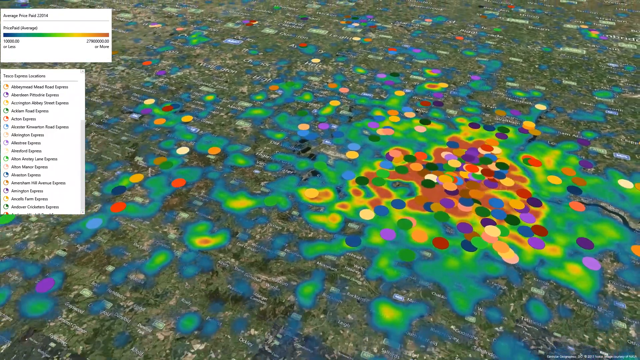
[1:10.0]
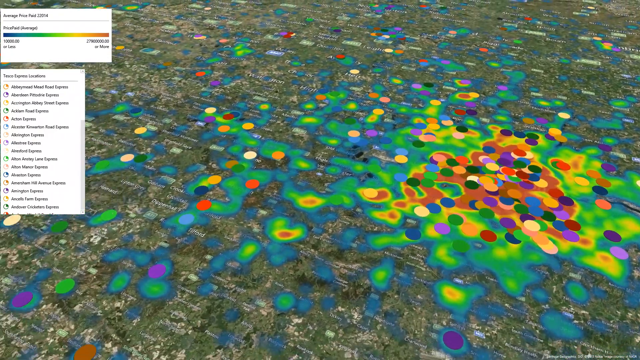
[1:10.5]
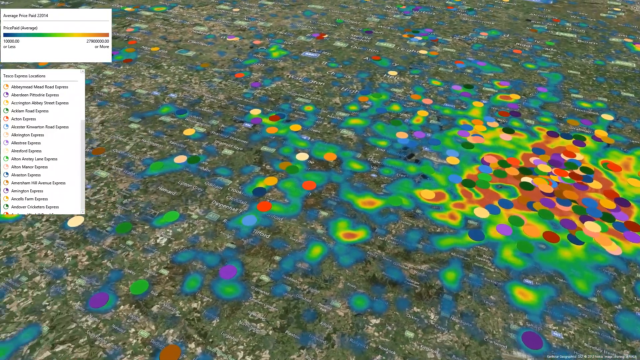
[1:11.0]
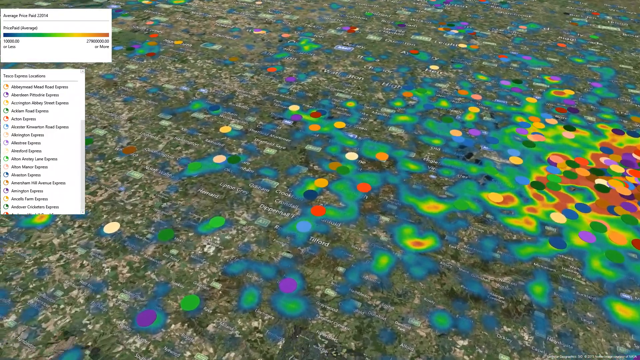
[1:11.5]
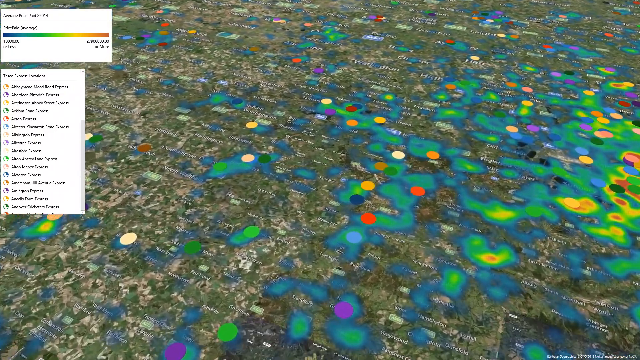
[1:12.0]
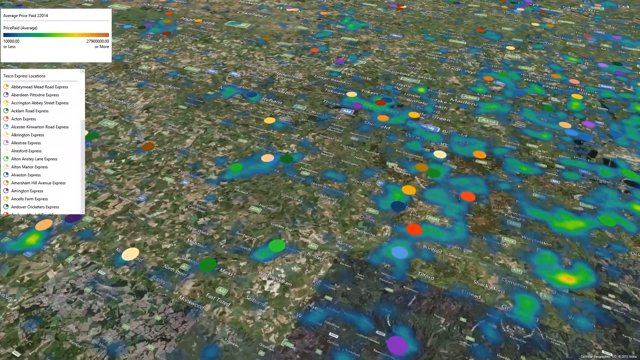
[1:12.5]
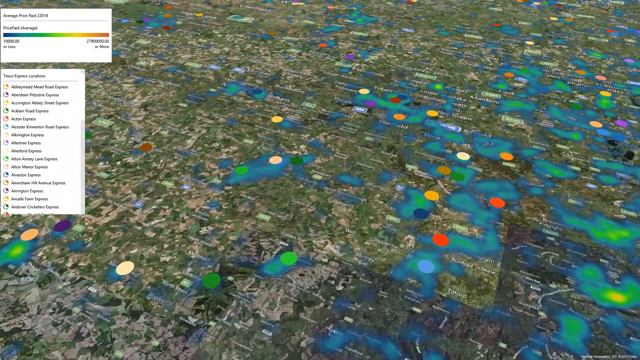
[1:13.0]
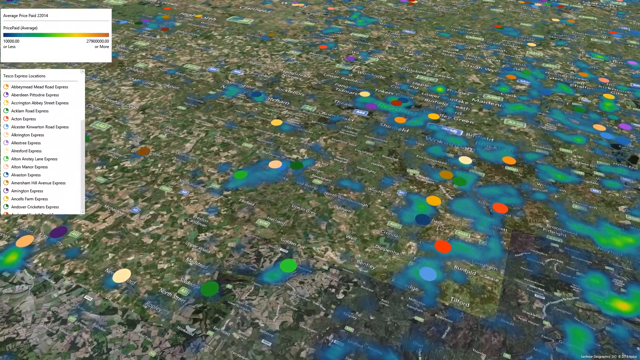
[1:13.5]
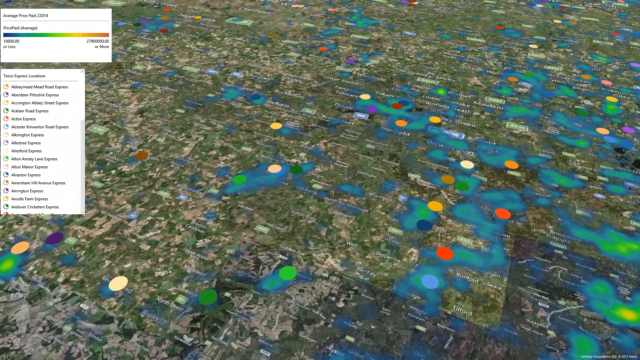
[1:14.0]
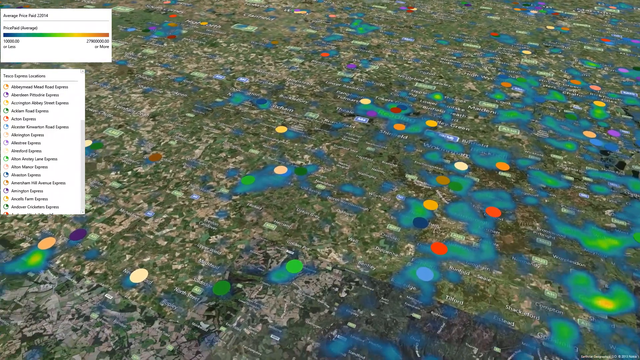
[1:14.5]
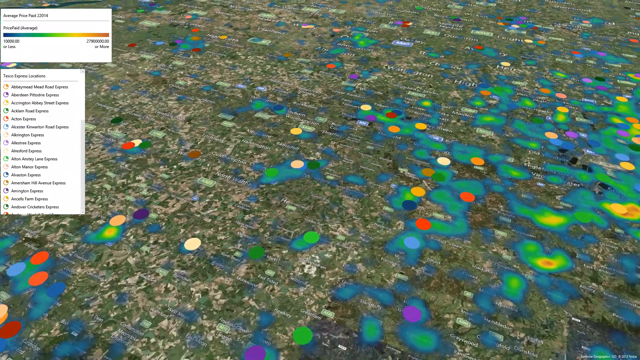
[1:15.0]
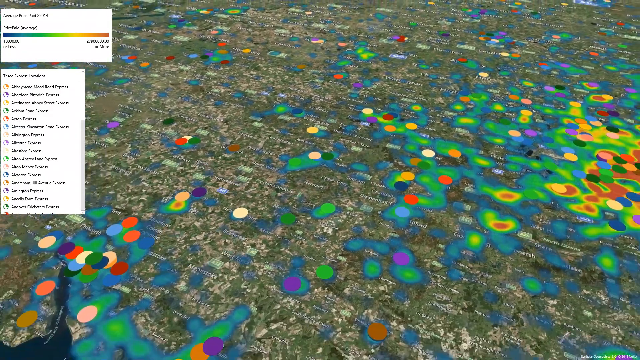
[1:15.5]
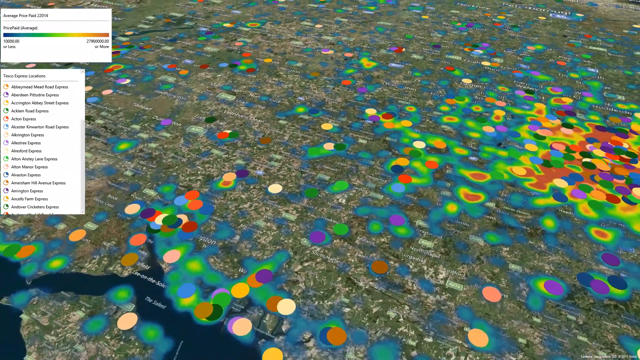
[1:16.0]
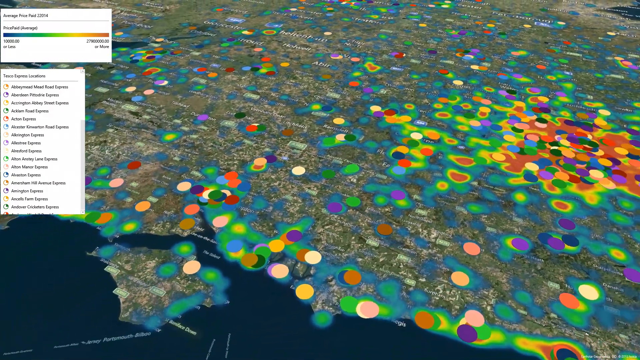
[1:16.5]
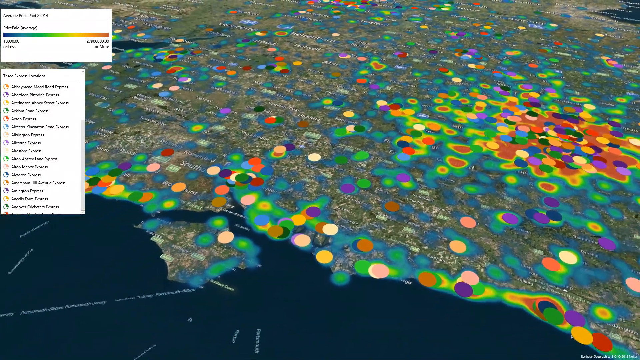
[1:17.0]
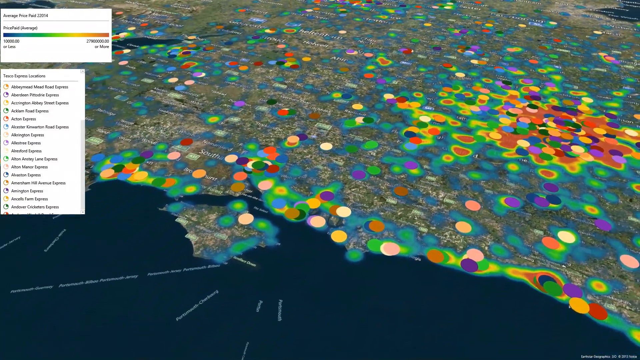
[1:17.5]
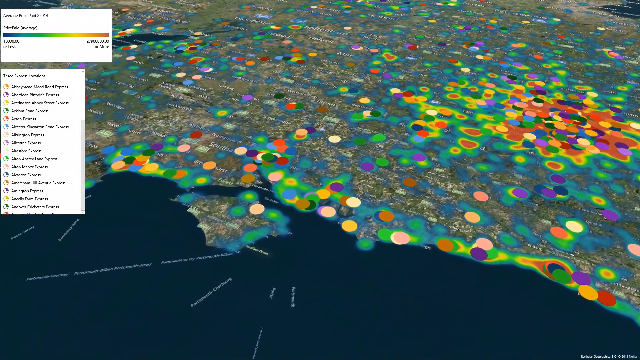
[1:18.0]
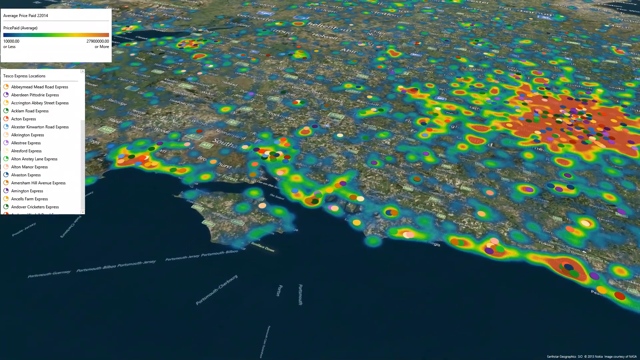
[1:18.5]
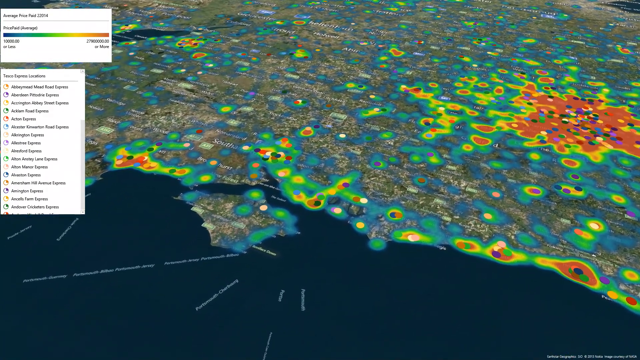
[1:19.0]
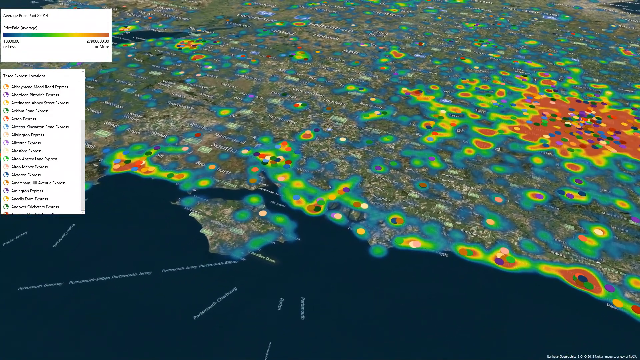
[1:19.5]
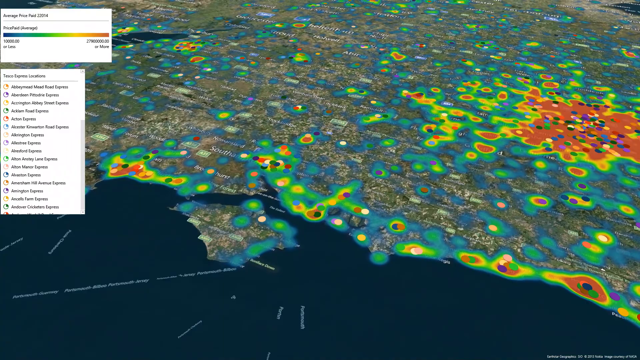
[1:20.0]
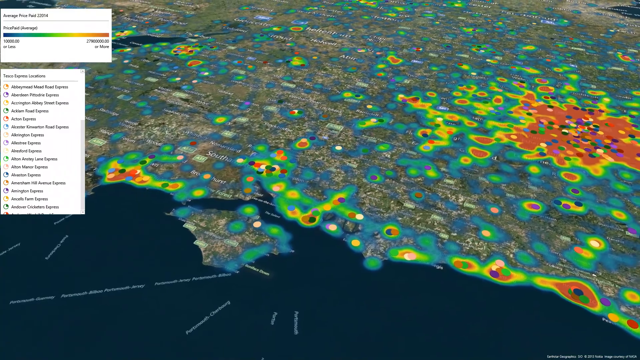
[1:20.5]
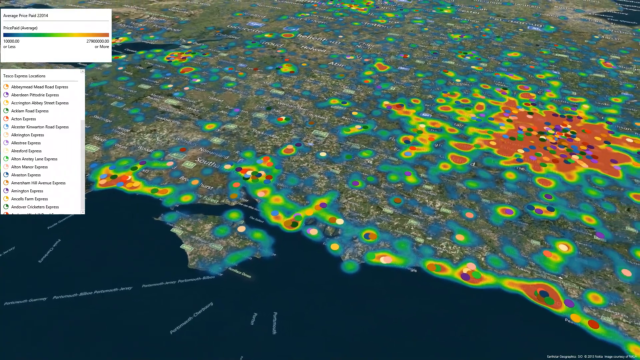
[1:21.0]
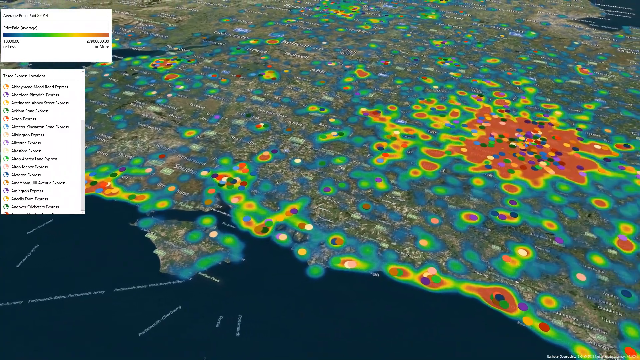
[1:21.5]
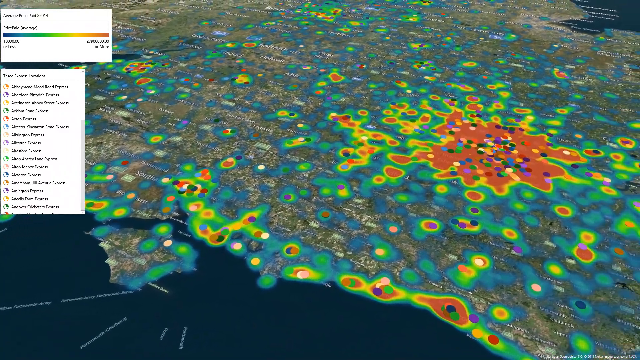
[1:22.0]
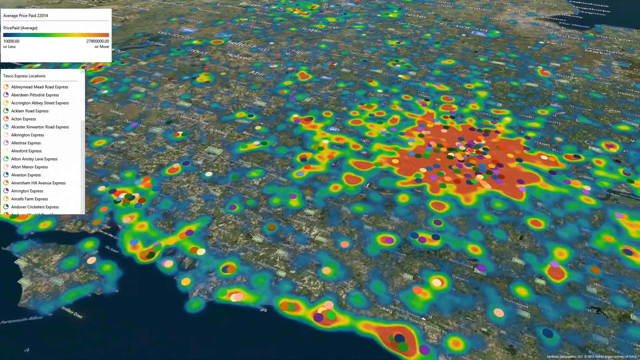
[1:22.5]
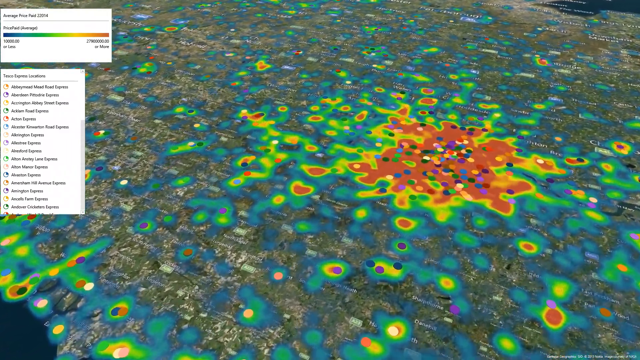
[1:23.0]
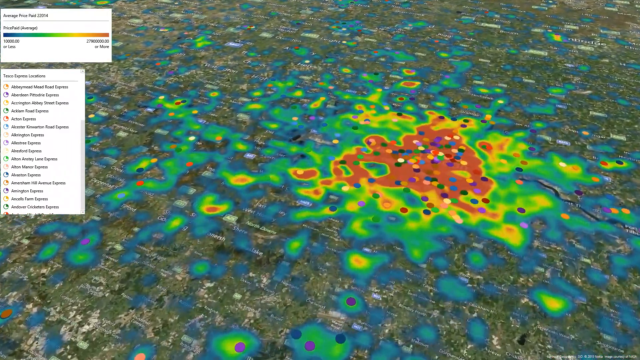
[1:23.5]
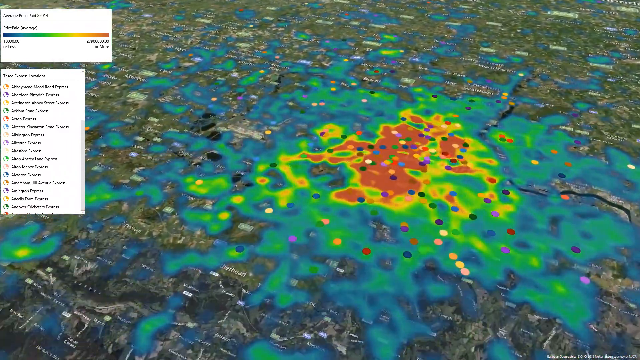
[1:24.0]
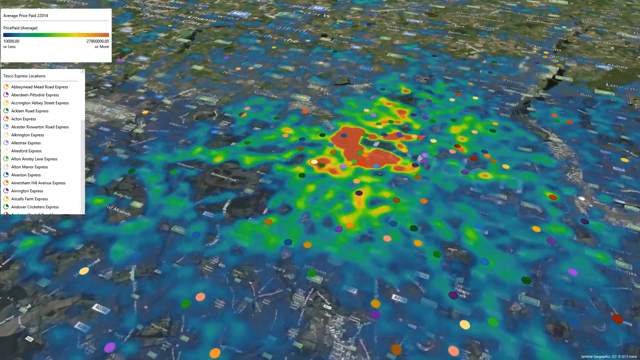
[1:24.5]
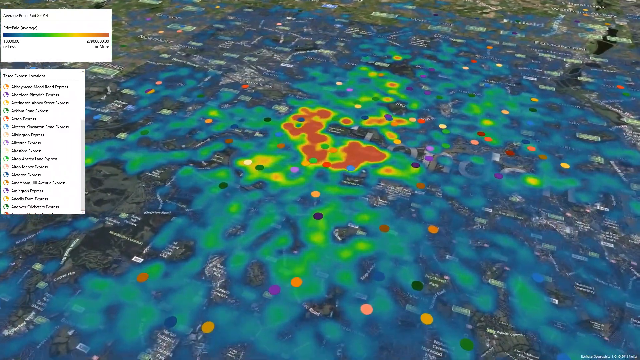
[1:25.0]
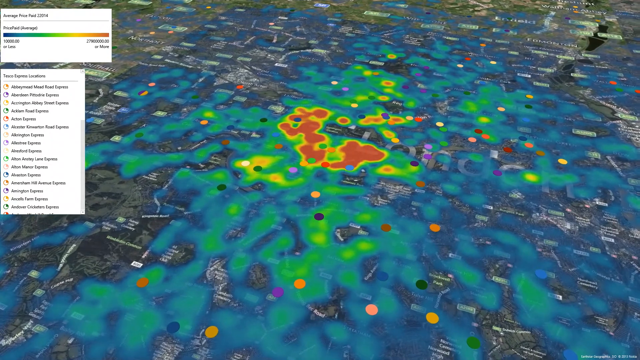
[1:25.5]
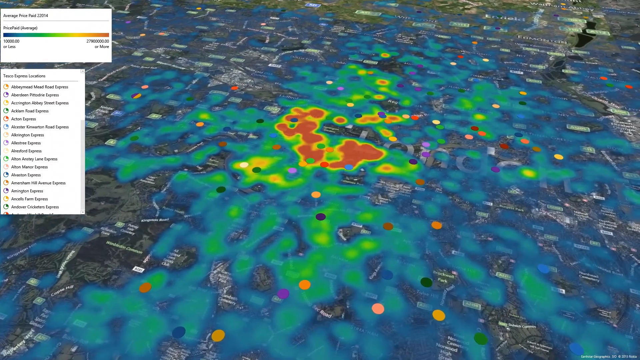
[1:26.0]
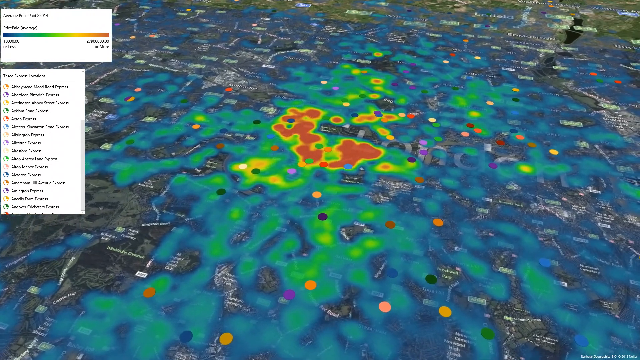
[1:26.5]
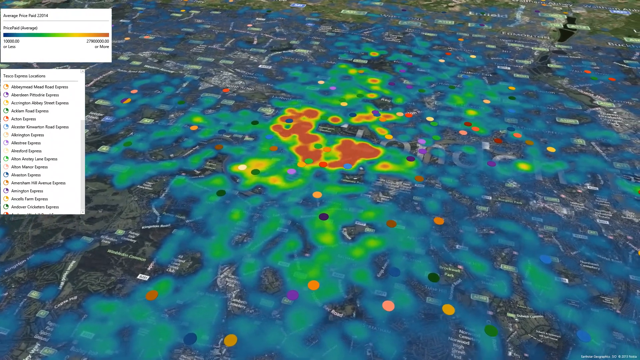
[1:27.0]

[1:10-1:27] With the camera zoomed all the way into the map, clusters of the smaller dots almost overlap one another in certain areas, while in others there are gaps before another dot appears. The dots continue all the way to the coastline and to an island off the coast. Zoomed all the way in, the primary color on this portion of the map is sky blue with some green layered in; at the very center is the darker red from the end of the color bar, with its edges in the neighboring yellow. The box reads "average price paid" and has a color bar that goes from darker blue into blue, blue into green, green getting lighter and flowing into yellow, and yellow turning orange before finally becoming the dark red that the whole area appears to be from the overview. Underneath that original box is a secondary box containing the individual colored dots, a key to them, and an alphabetical list of apparently city names.